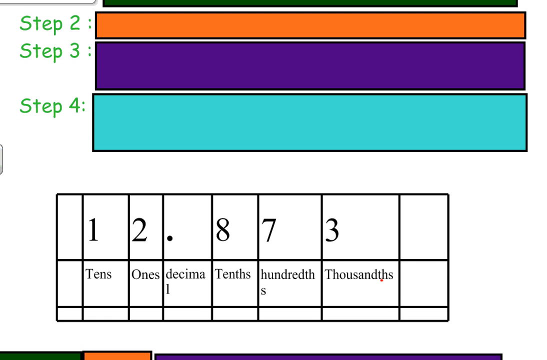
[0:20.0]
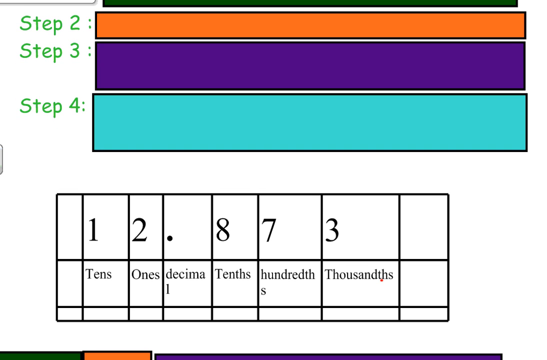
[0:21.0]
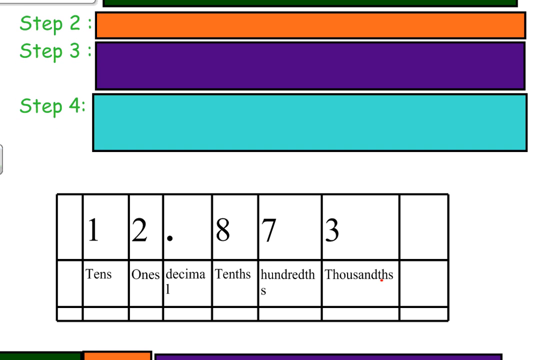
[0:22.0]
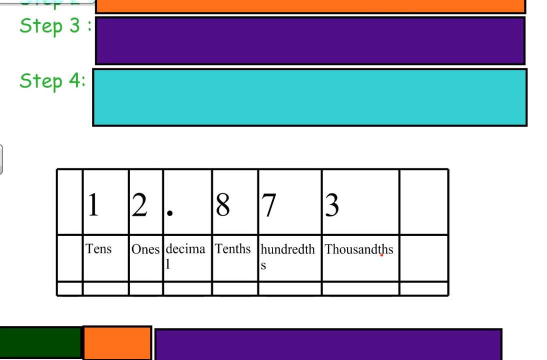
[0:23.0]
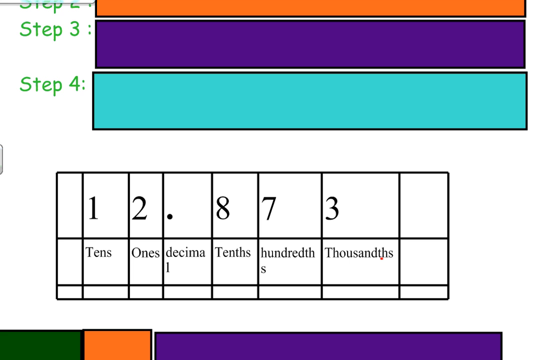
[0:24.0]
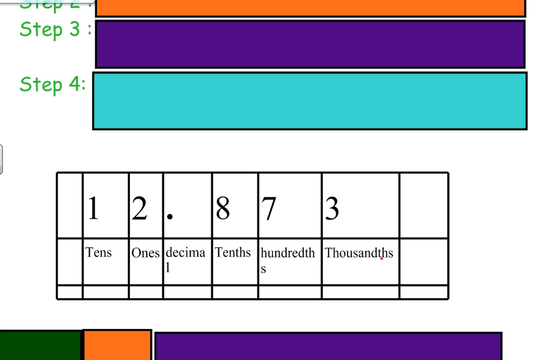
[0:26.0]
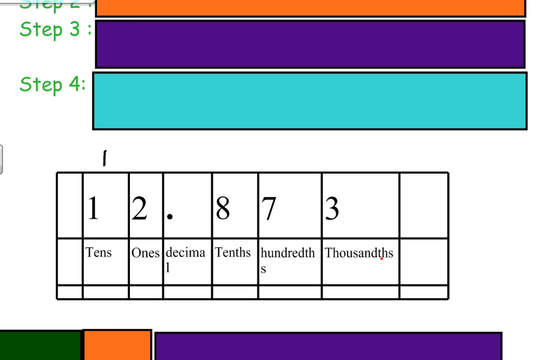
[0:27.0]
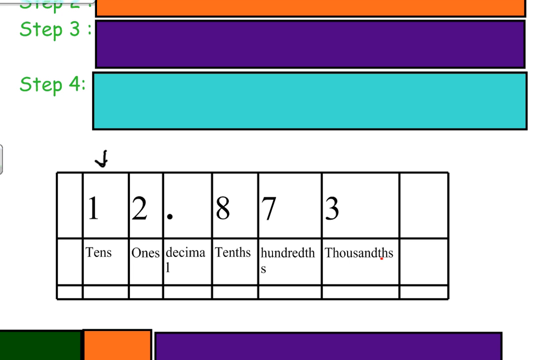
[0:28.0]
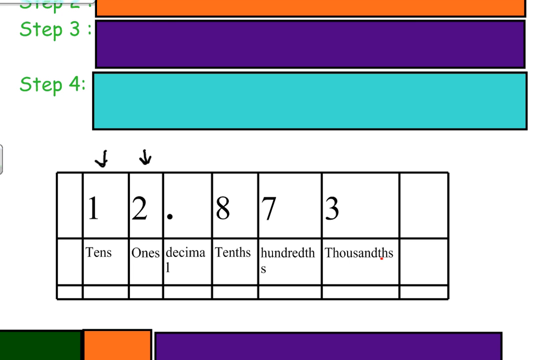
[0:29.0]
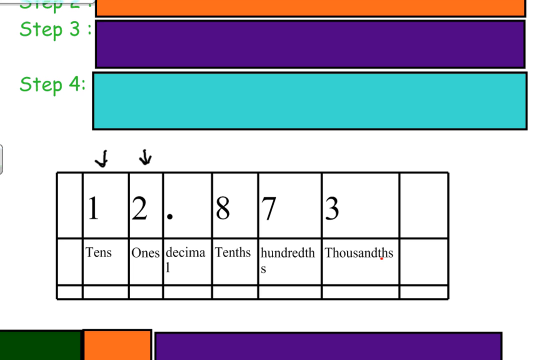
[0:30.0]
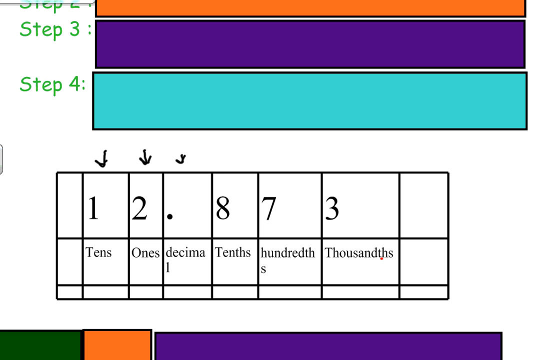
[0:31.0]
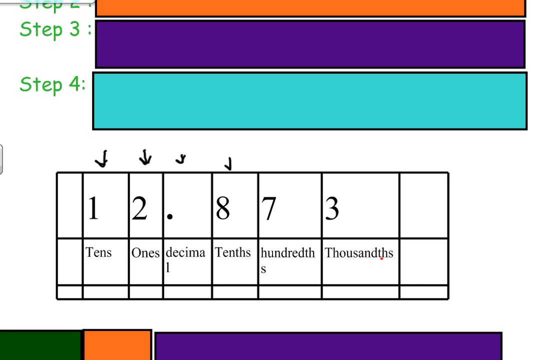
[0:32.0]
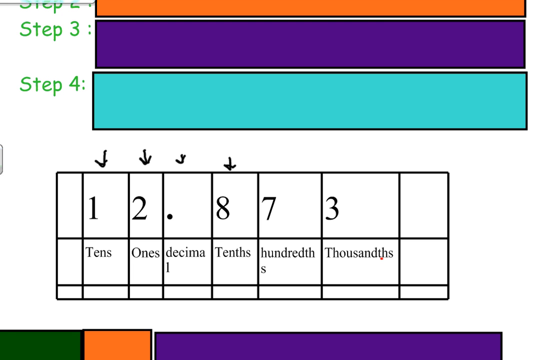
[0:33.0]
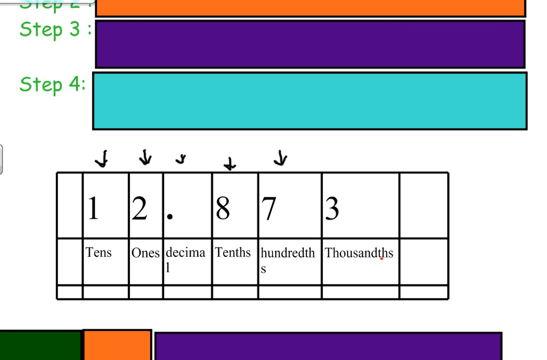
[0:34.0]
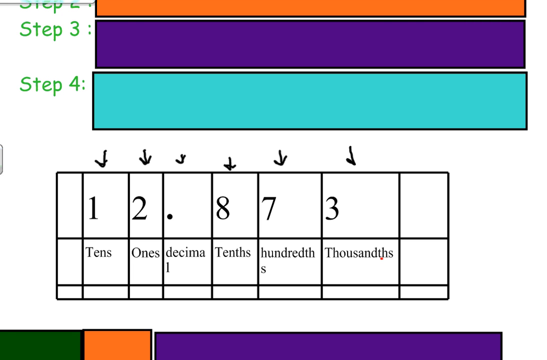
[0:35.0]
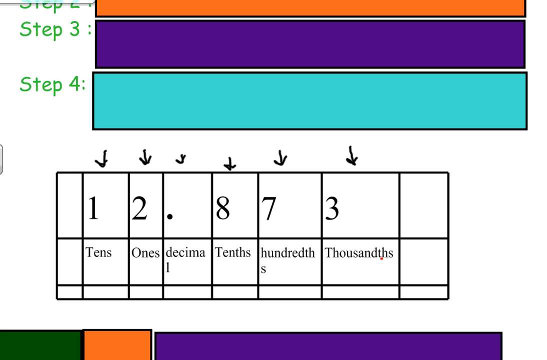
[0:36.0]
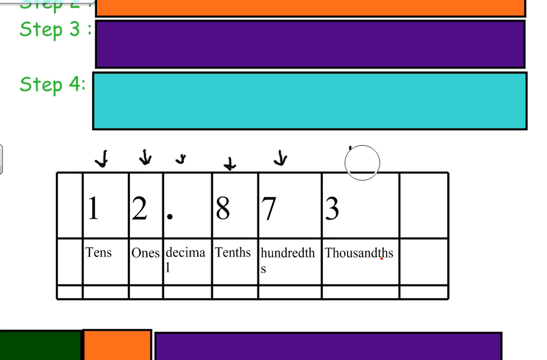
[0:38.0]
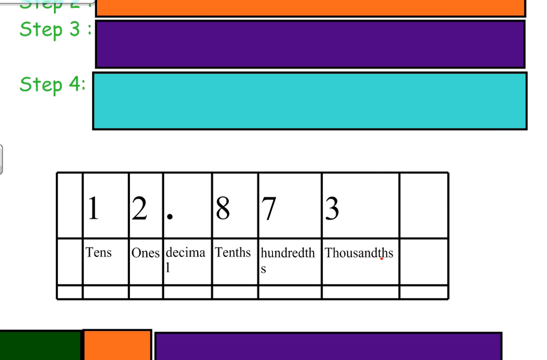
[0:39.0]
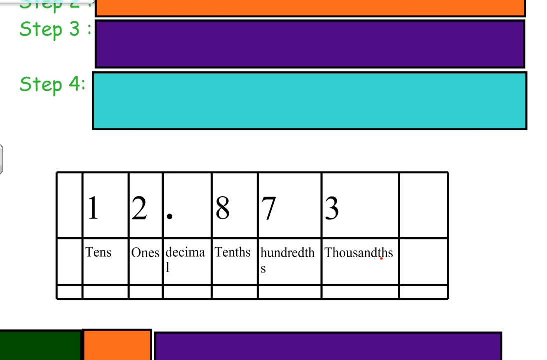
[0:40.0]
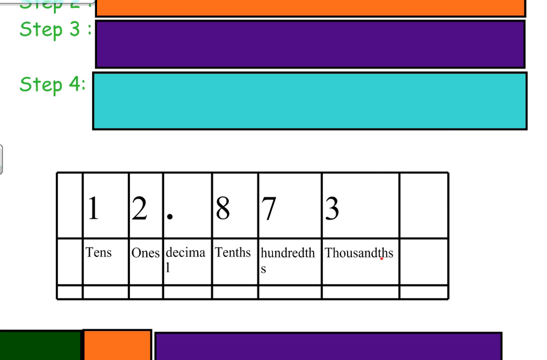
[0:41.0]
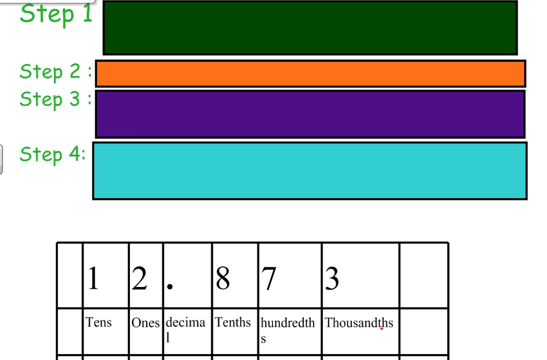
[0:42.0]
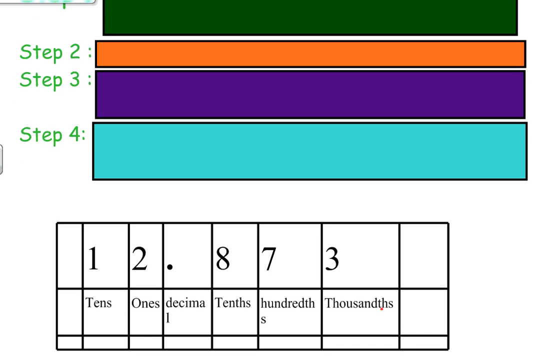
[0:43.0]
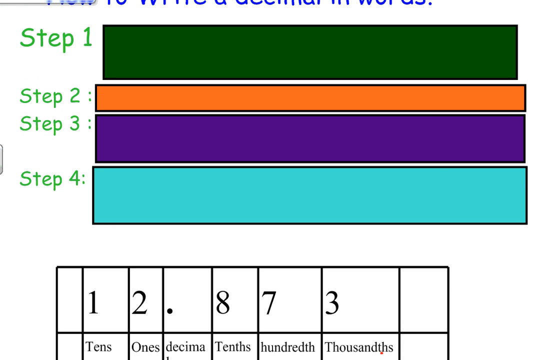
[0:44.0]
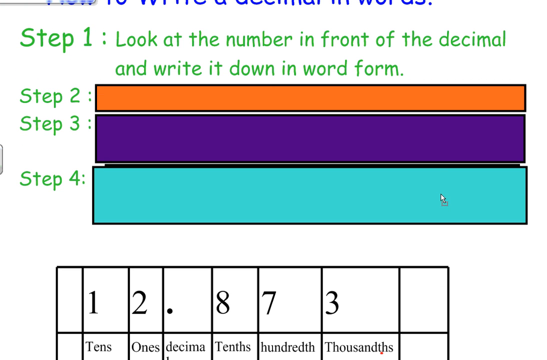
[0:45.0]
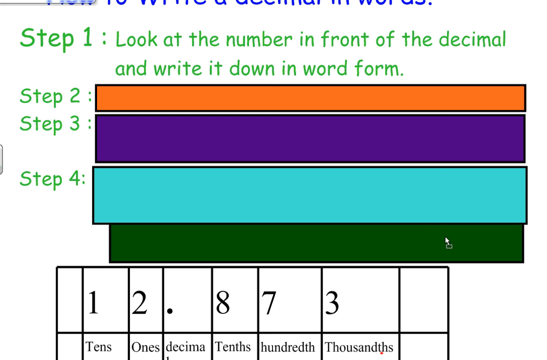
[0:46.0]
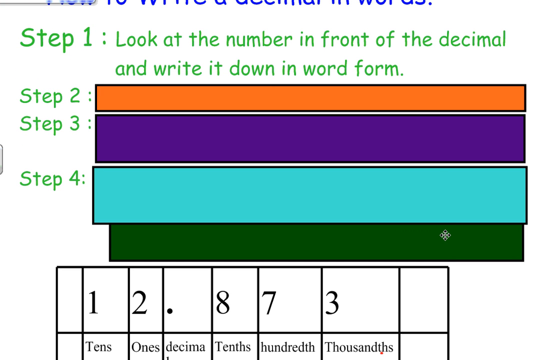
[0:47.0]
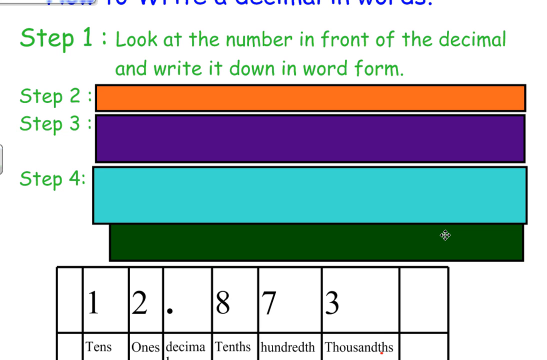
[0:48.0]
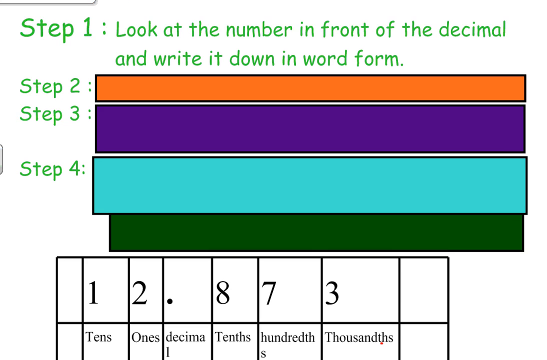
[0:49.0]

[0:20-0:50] Place values are shown, including the tens, the ones and the decimal, with arrows pointing at the numbers. Step 1 is to look at the number in front of the decimal and write it down in words.